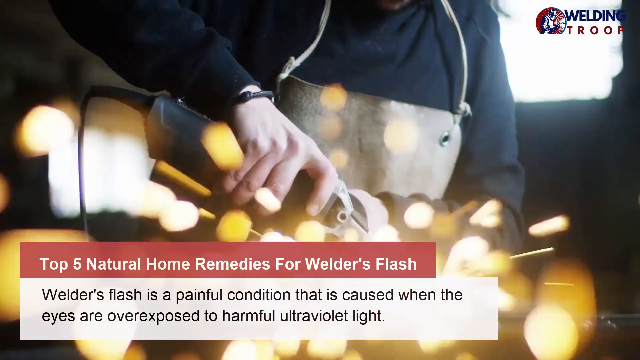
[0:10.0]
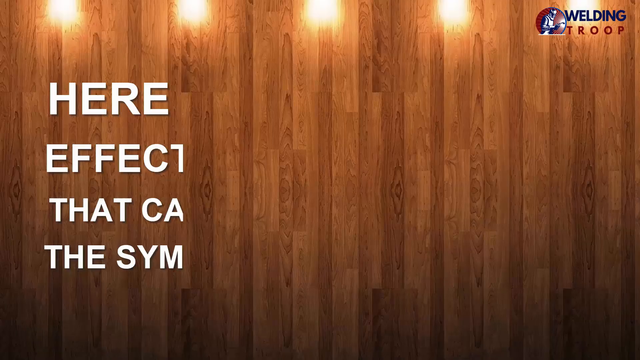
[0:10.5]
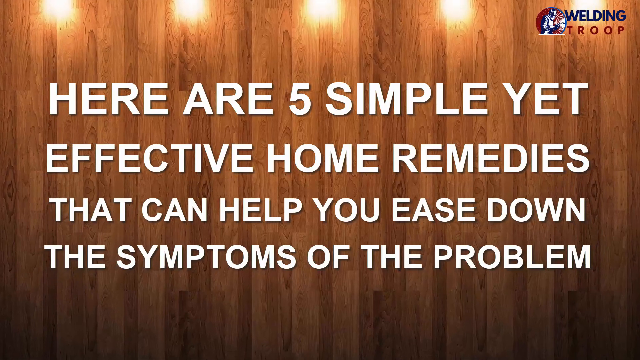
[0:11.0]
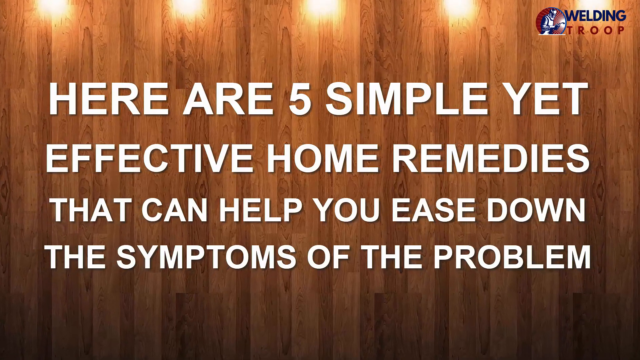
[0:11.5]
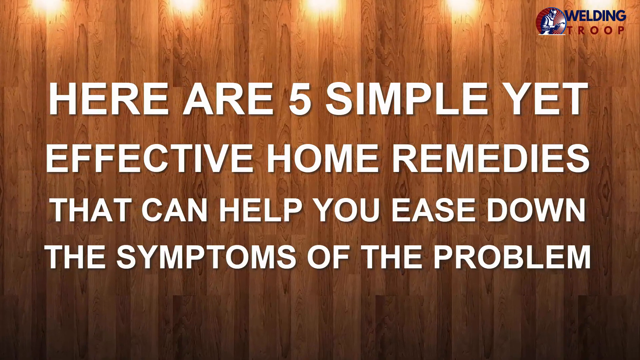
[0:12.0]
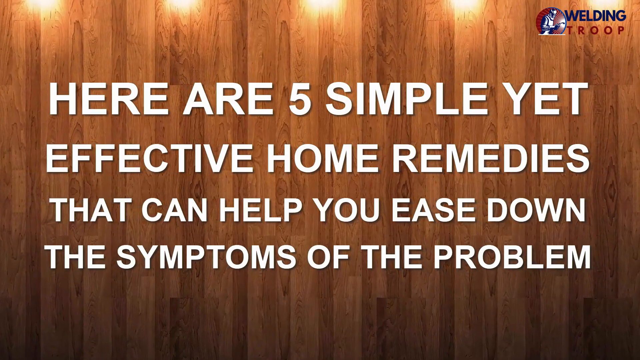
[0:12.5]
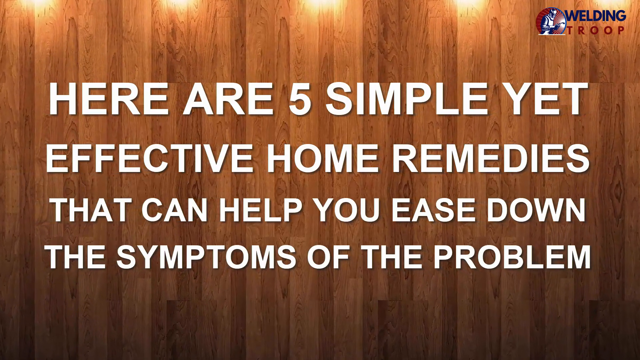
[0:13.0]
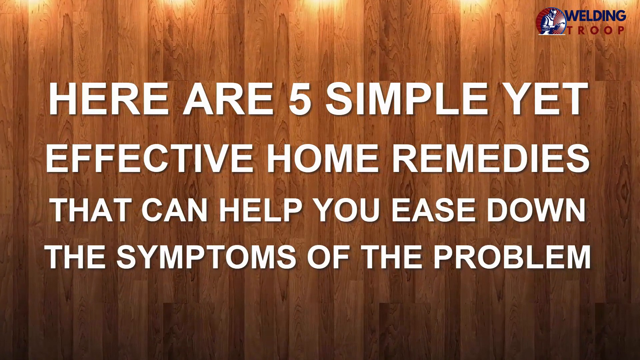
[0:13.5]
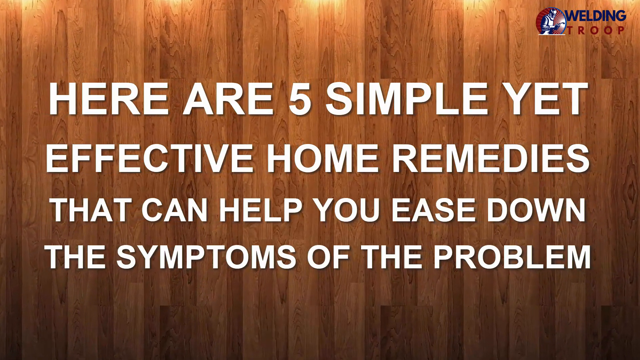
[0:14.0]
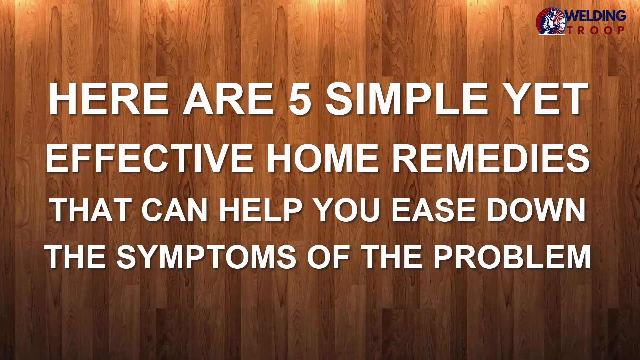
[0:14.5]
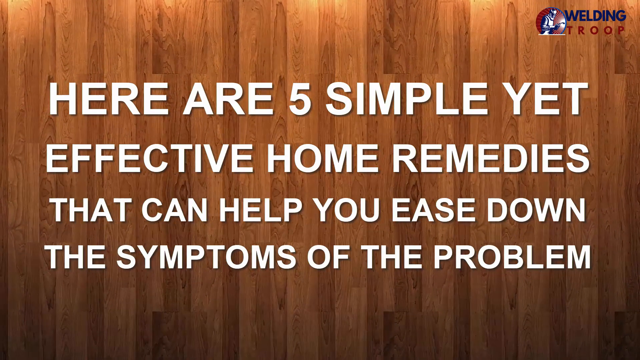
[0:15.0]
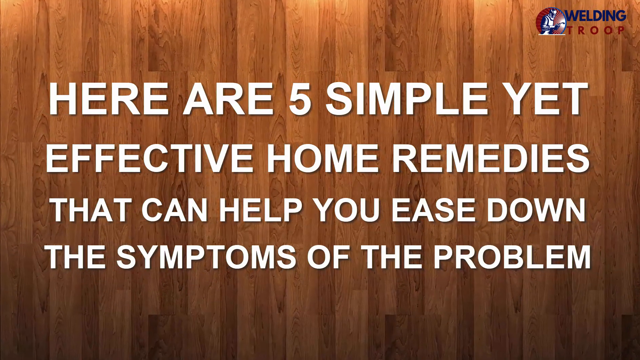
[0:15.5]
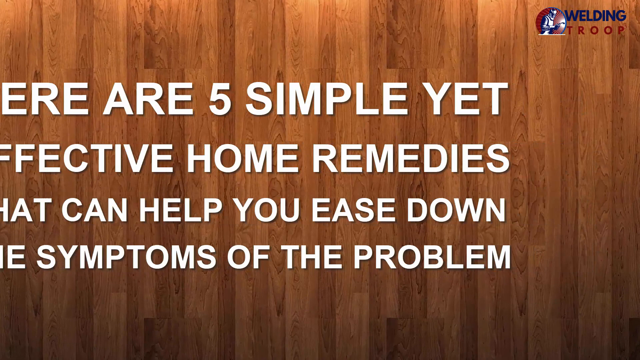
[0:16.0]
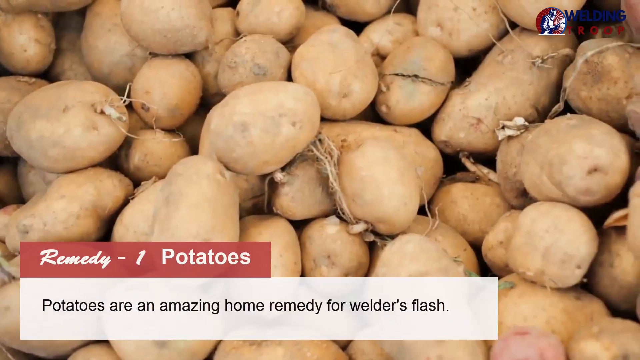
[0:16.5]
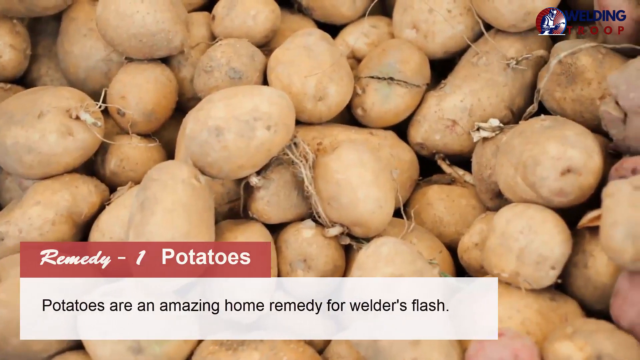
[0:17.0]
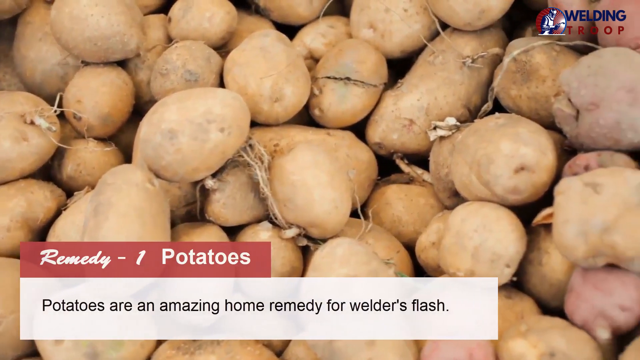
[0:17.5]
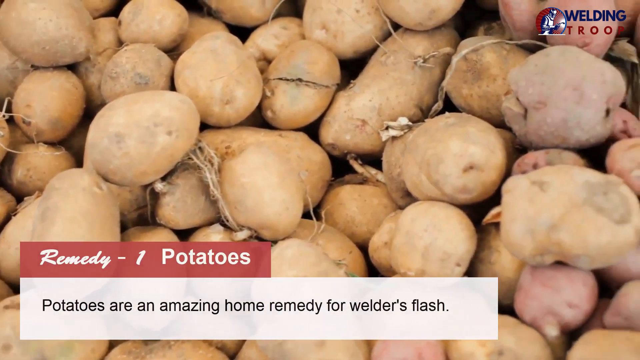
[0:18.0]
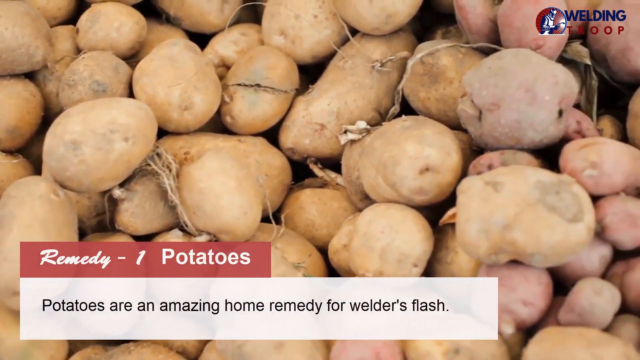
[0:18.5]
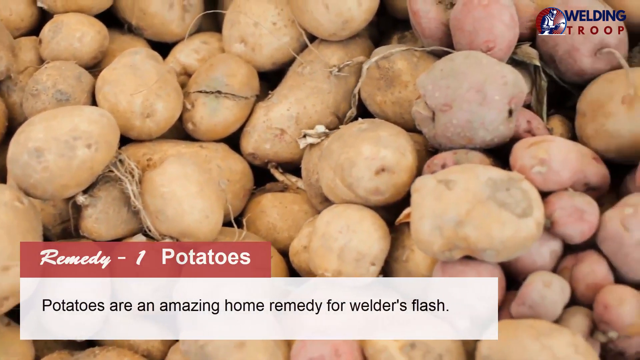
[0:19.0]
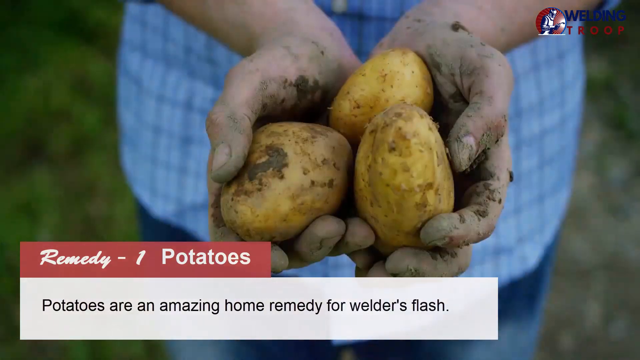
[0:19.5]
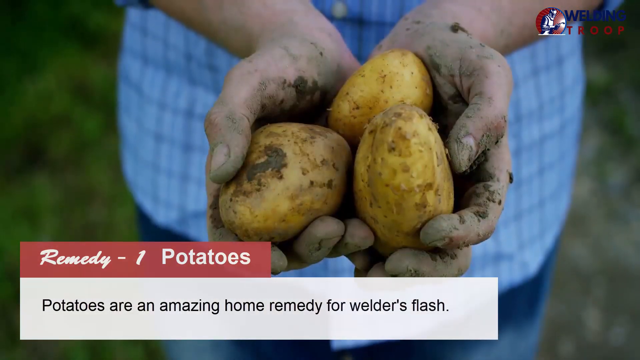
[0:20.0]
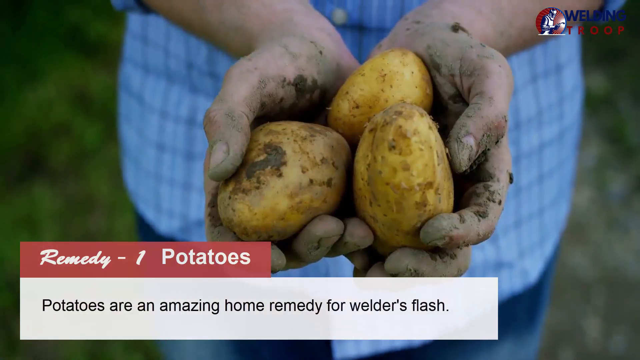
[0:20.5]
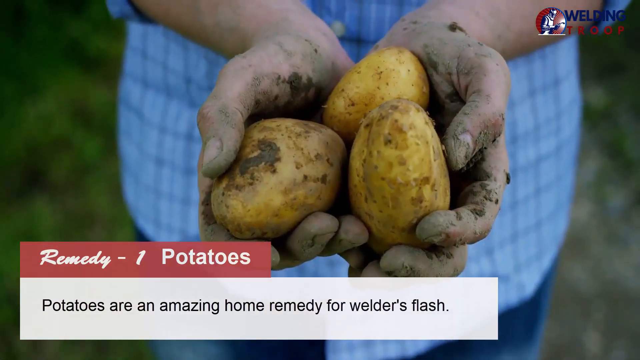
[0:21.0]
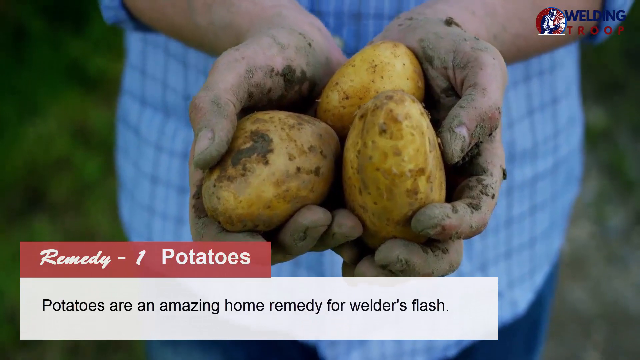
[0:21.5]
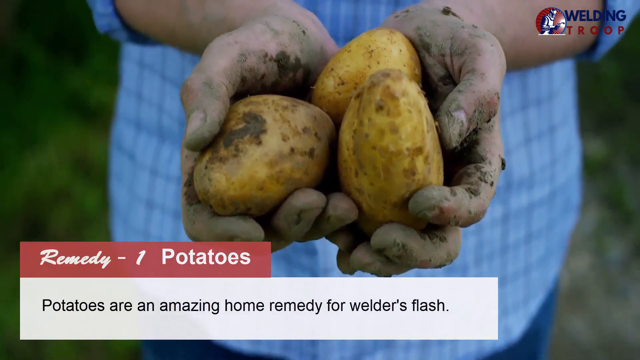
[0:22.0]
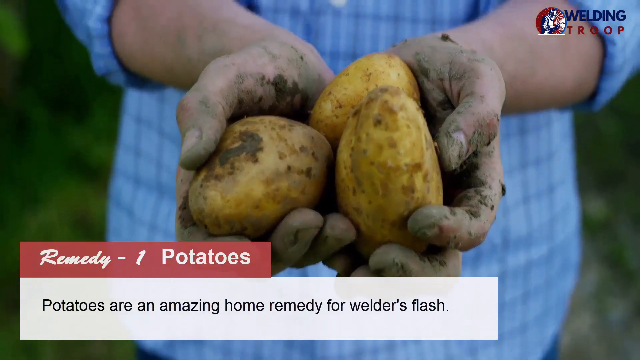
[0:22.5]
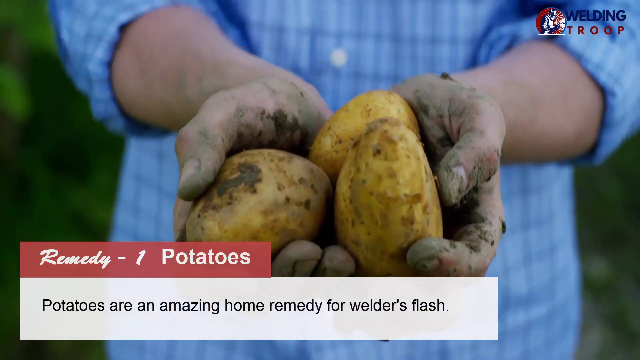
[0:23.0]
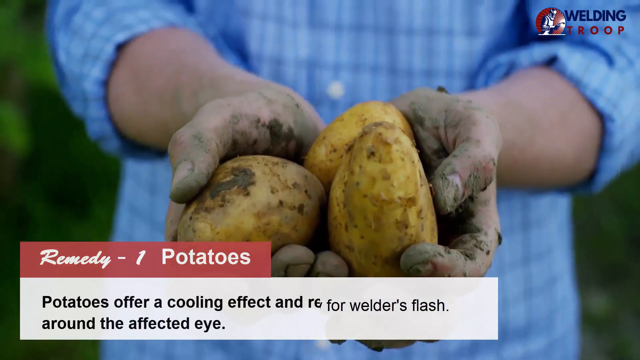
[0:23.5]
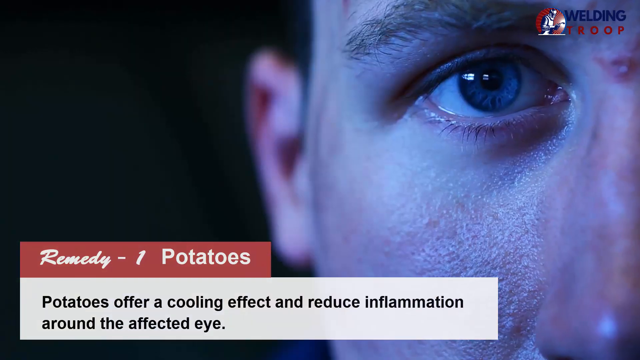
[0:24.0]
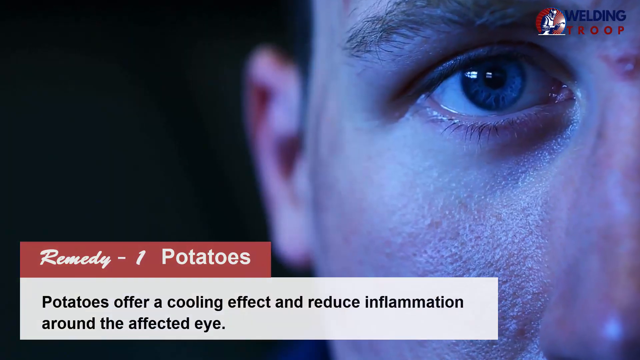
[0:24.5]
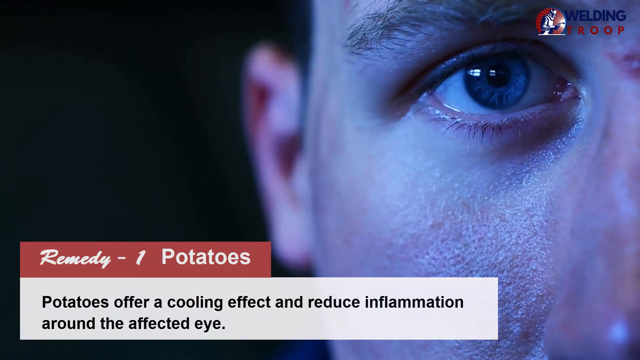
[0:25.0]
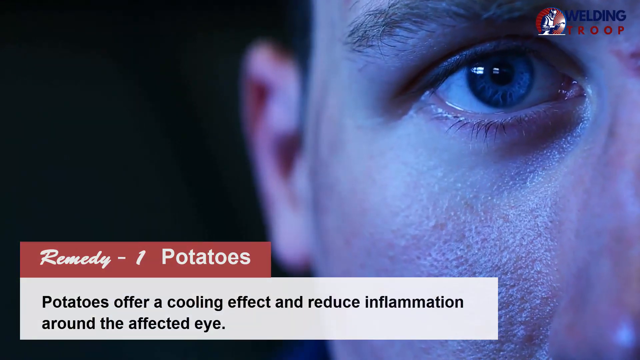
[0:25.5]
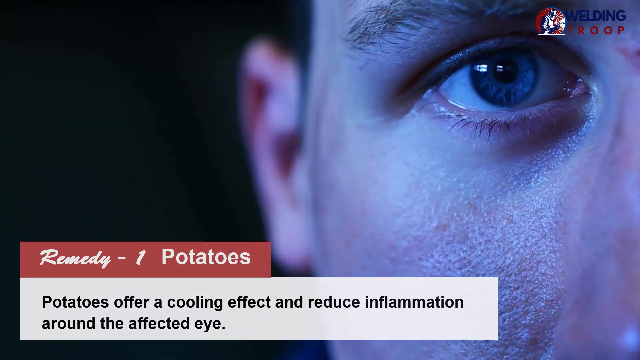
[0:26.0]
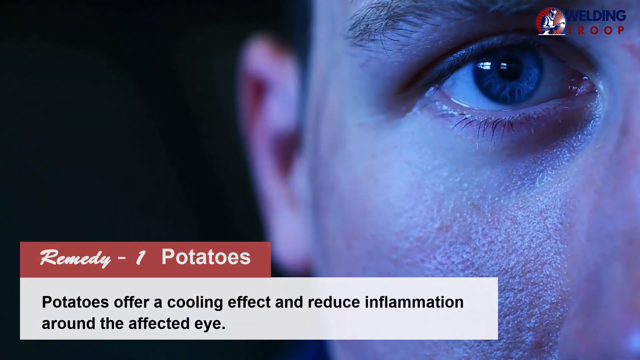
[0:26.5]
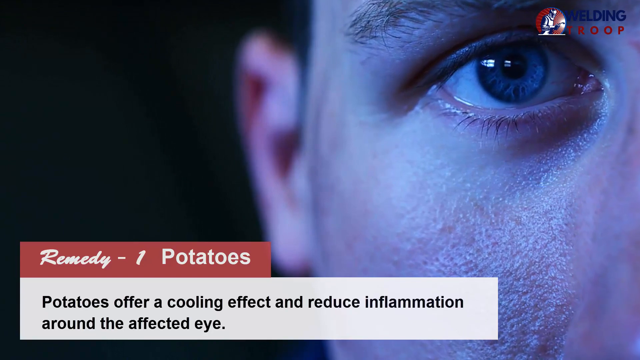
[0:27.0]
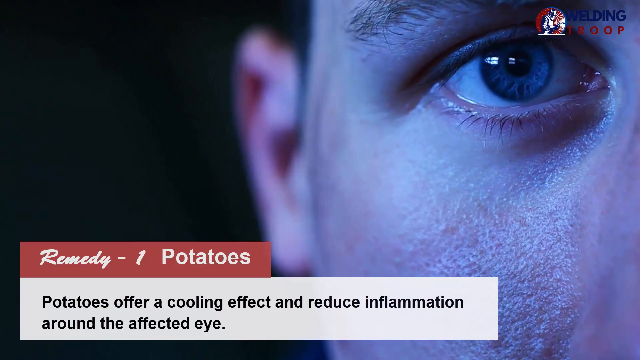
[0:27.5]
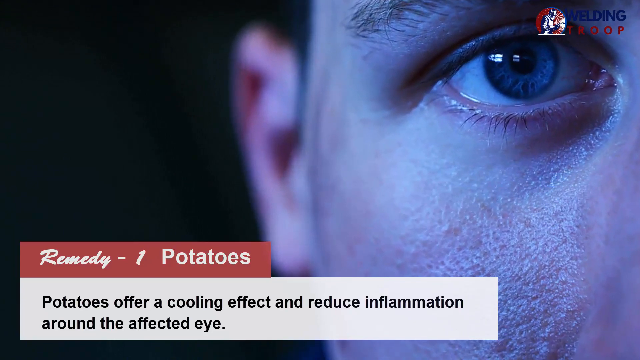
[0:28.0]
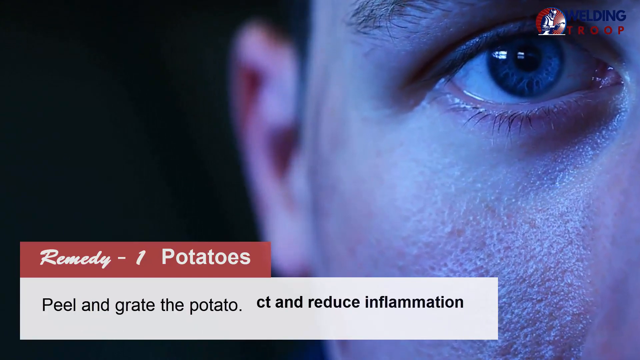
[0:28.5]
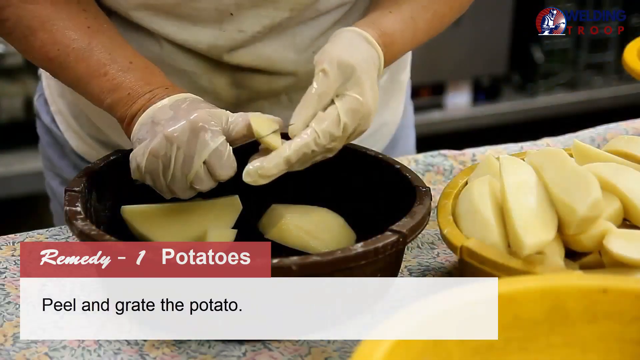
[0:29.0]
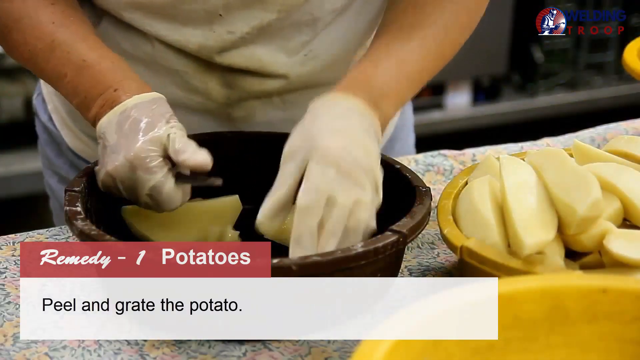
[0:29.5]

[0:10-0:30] Text reads "here are five simple yet effective home remedies that can help you ease down the symptoms of the problem." Potatoes appear in the background with the text "remedy one potatoes" and "Potatoes are an amazing home remedy for welder's flash." The background changes to a man who has just picked some potatoes; his hands and the potatoes are covered in dirt. The text changes to explain remedy one further: "Potatoes offer a cooling effect and reduce inflammation around the affected eye." Behind it is a close-up picture of a man's eye, also showing his ear and half of his nose. Text at the bottom of the screen then says "Peel and grate the potato" while a man peels potatoes over a bowl.